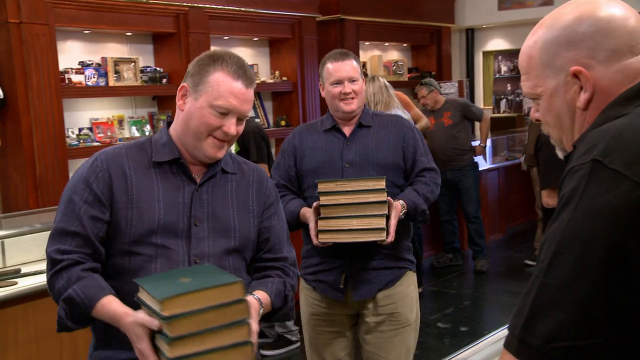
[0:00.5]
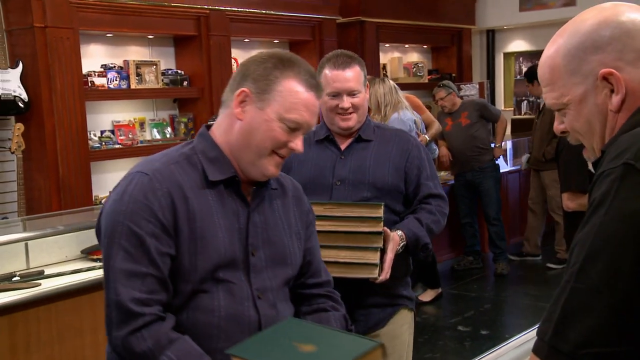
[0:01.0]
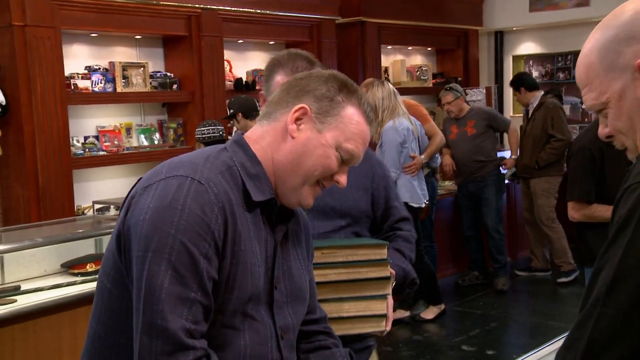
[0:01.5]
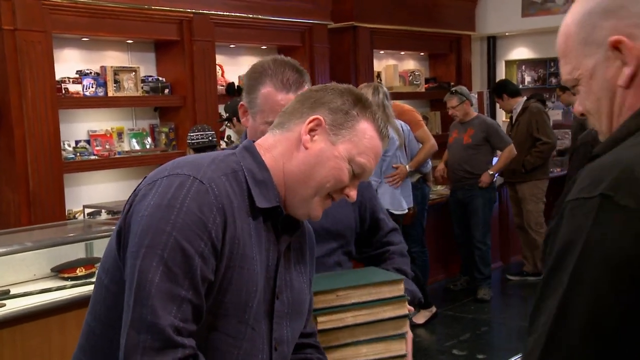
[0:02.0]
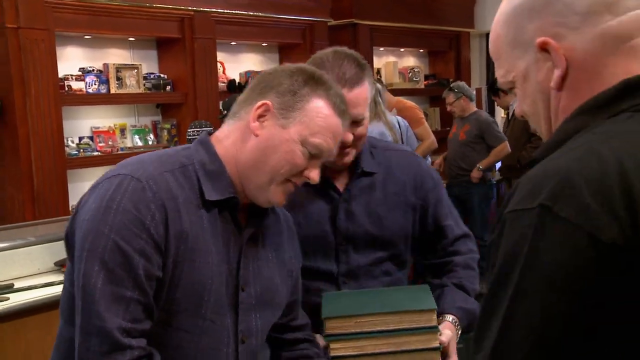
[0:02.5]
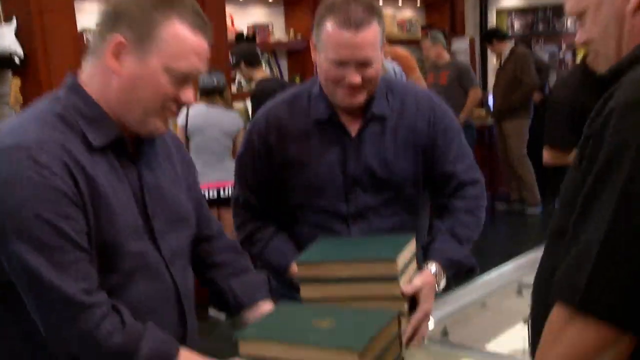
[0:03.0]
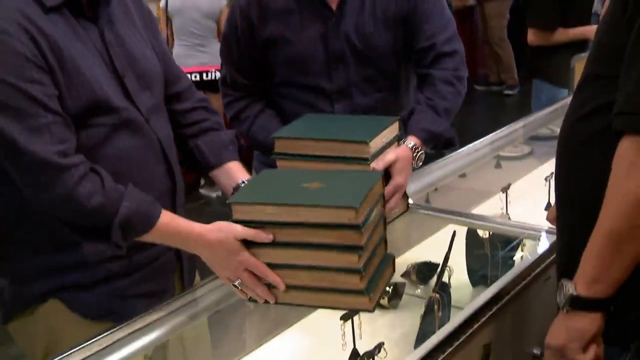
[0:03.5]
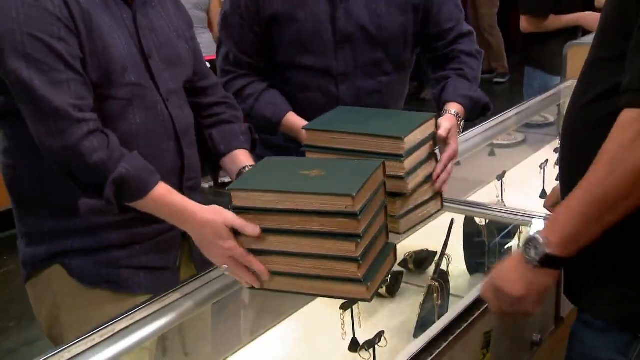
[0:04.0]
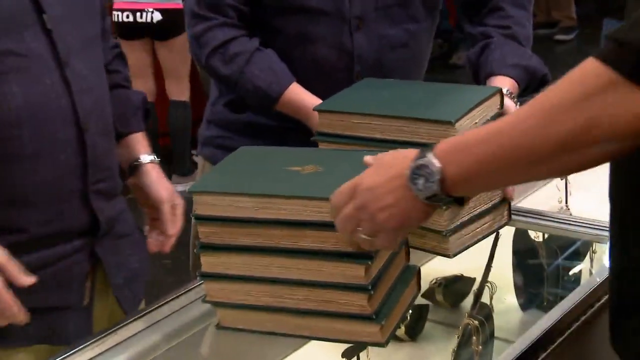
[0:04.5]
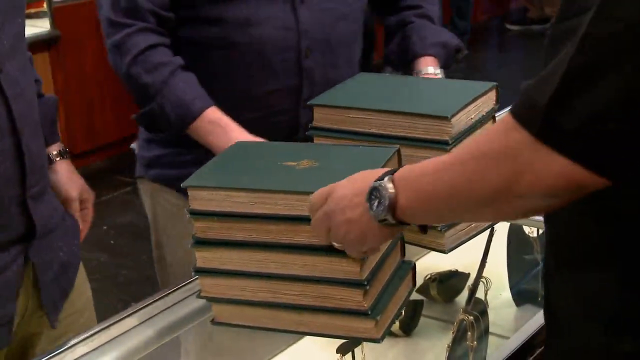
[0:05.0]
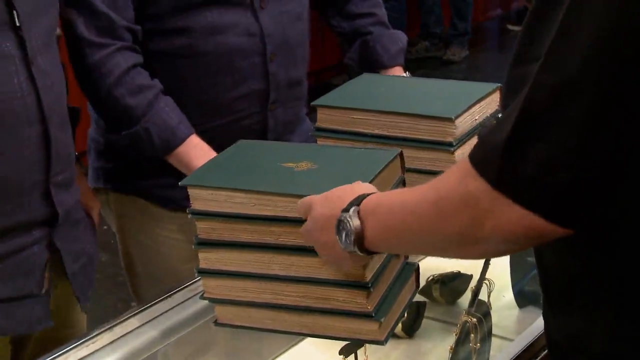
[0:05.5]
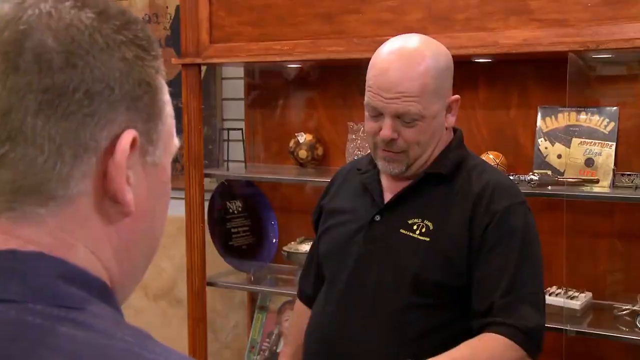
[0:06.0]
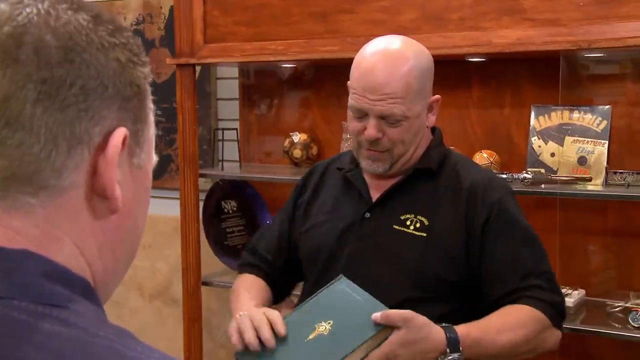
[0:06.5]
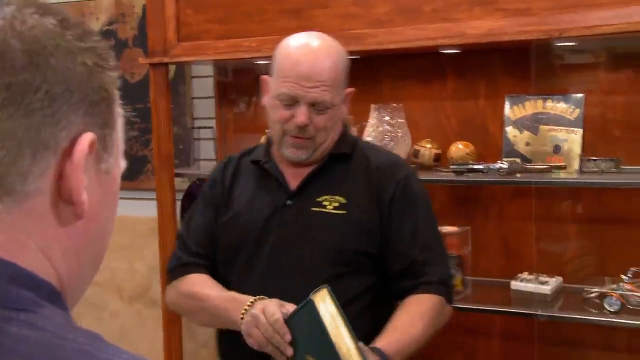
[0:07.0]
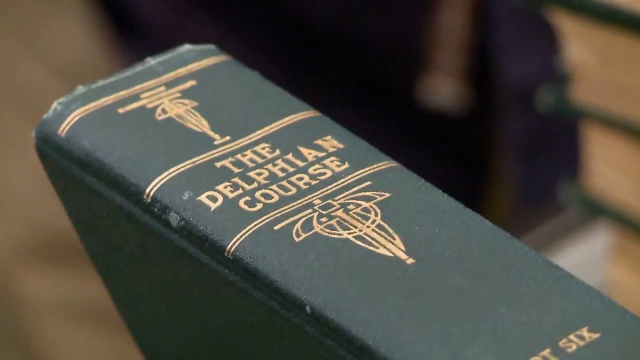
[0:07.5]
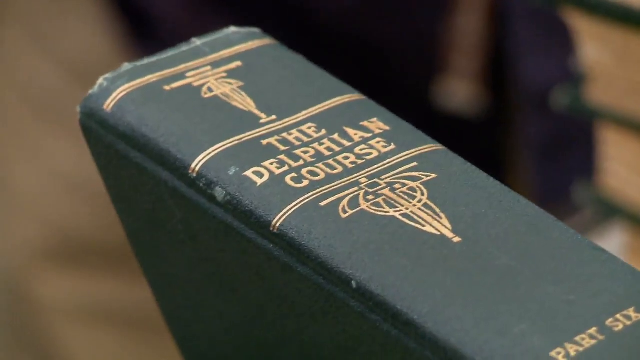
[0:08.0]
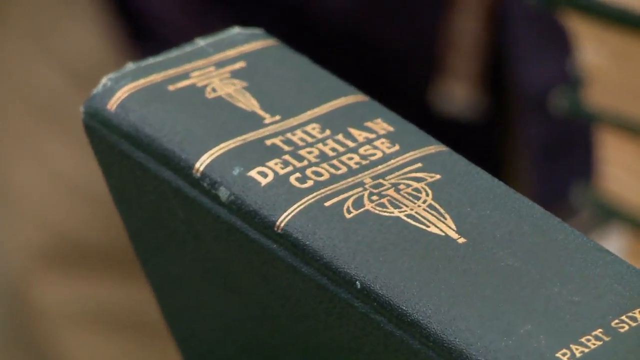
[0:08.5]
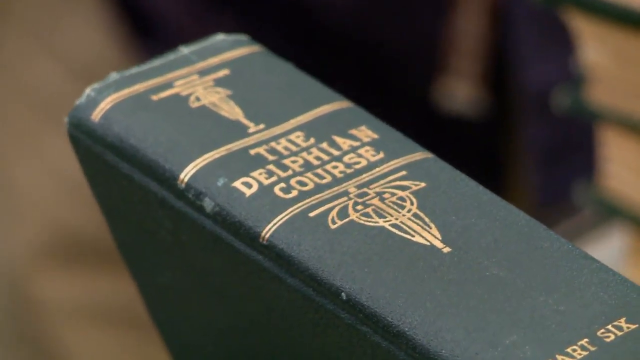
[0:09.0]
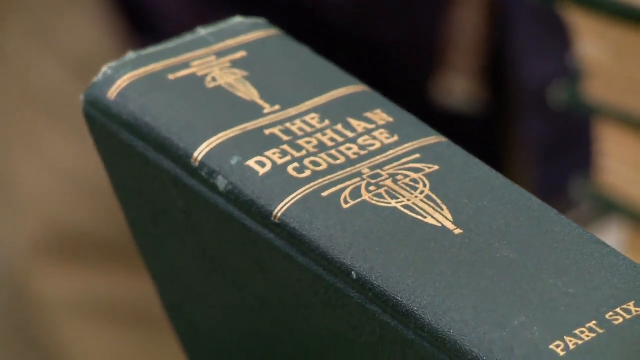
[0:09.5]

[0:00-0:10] Two men who look like brothers, both with short hair and looking very similar, wear blue shirts and walk up to a desk, each holding a pile of about five books with green covers. They put the books down on the counter, and a bald man behind the counter, in a short-sleeved black shirt with some yellow writing on it, looks at them. The books are the Delphian Course: they have green spines with "the Delphian course" written in yellow along with some sort of symbol. The scene appears to take place in a bookshop or maybe some sort of store, possibly a secondhand or antique store, with lots of things in glass cabinets behind the people.